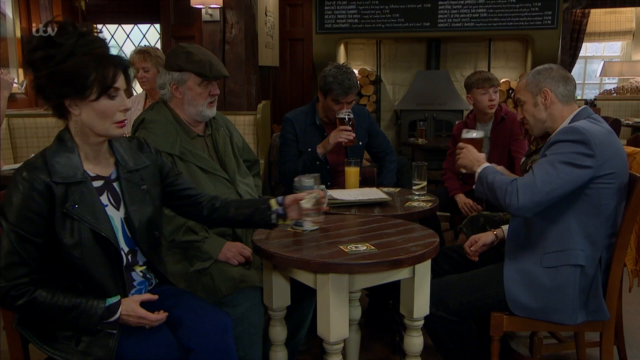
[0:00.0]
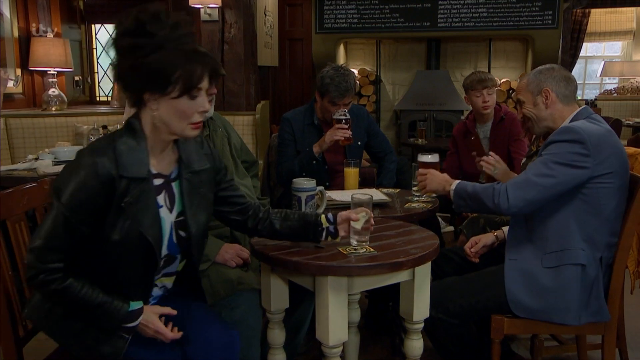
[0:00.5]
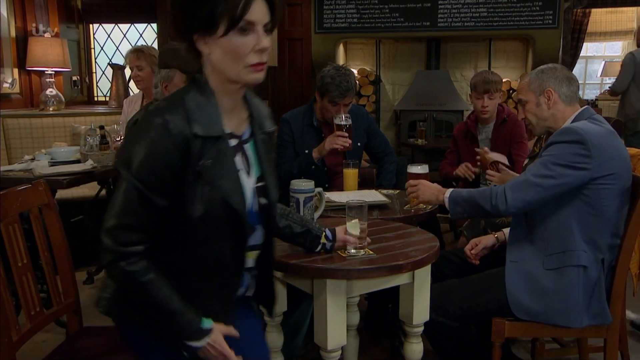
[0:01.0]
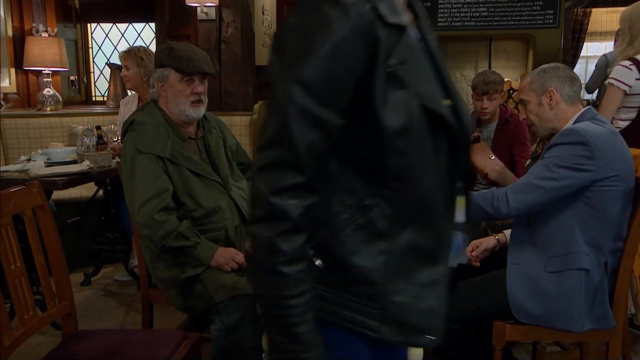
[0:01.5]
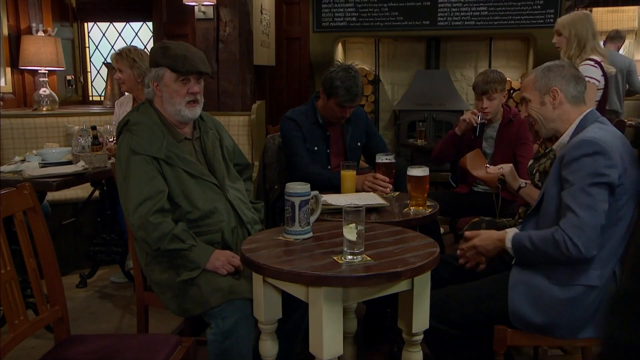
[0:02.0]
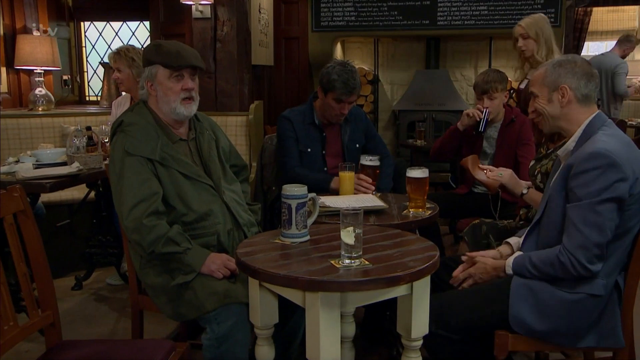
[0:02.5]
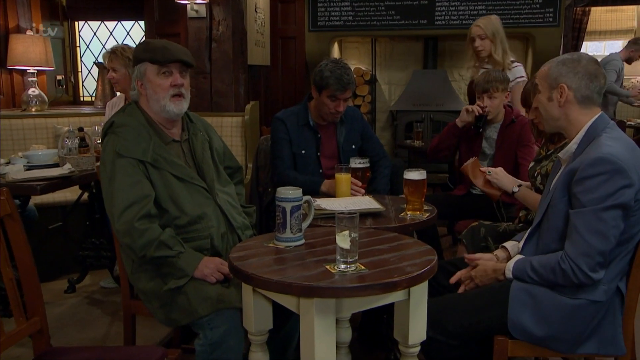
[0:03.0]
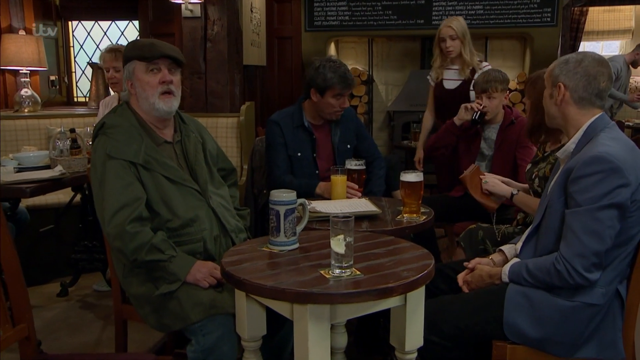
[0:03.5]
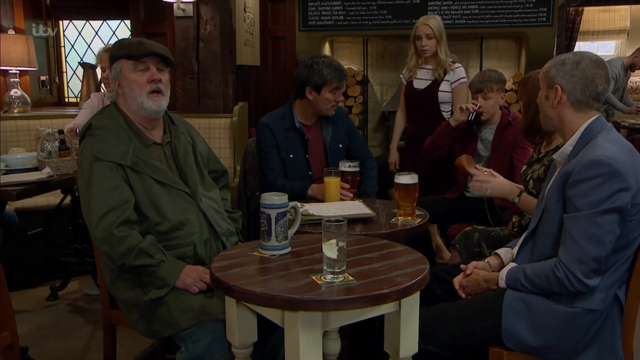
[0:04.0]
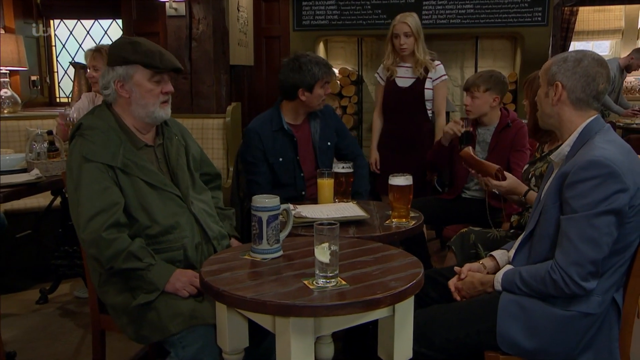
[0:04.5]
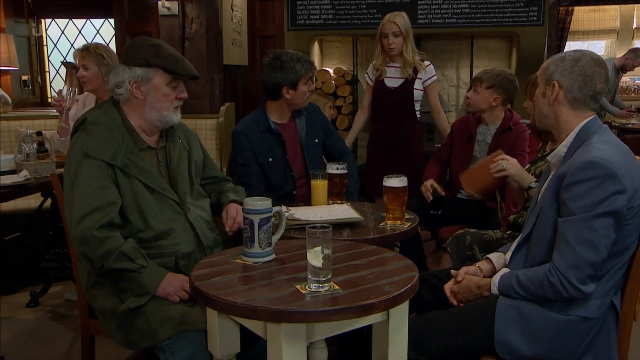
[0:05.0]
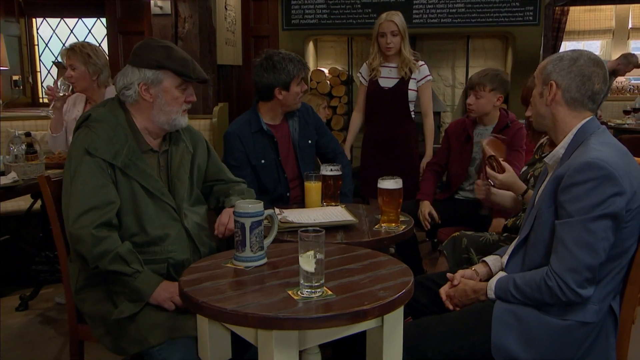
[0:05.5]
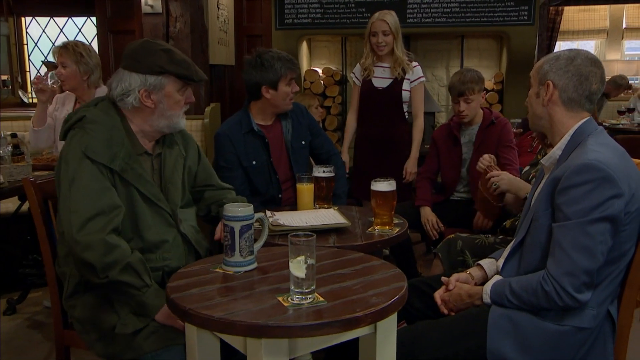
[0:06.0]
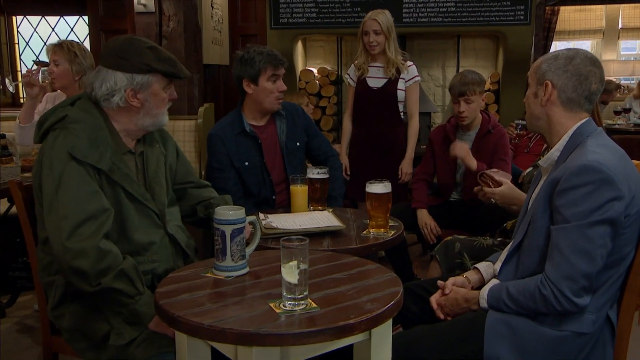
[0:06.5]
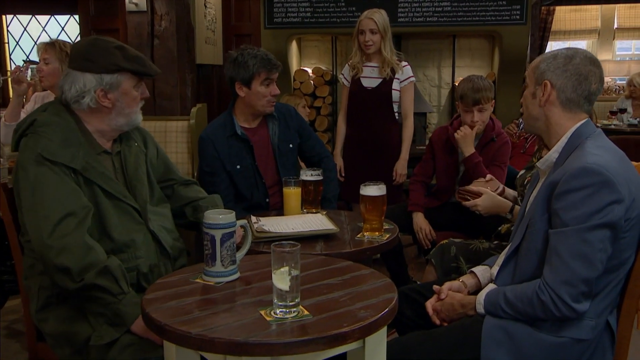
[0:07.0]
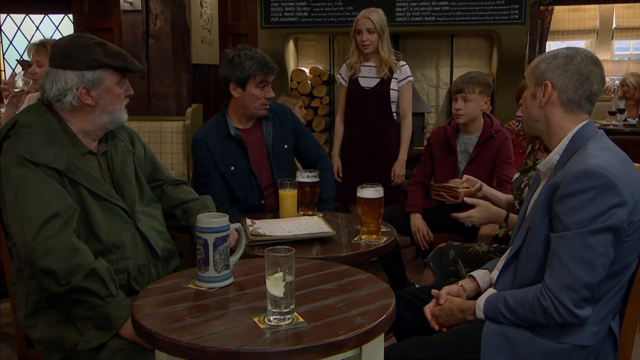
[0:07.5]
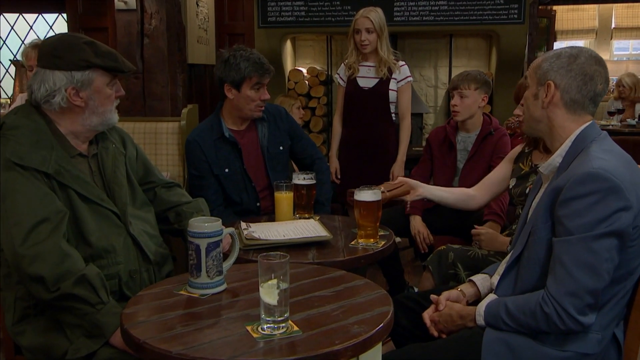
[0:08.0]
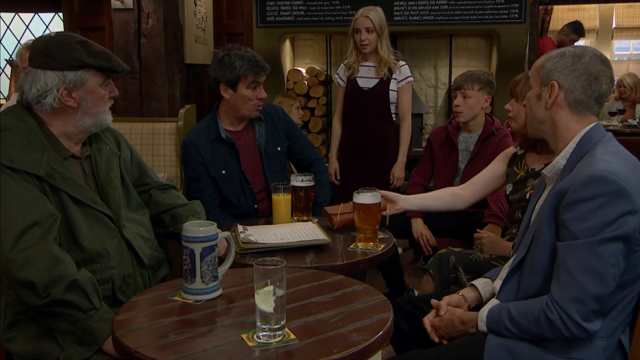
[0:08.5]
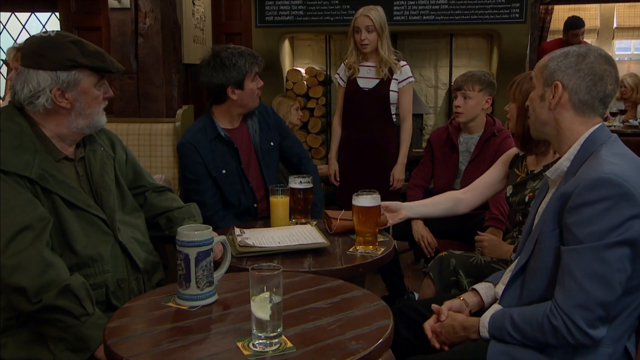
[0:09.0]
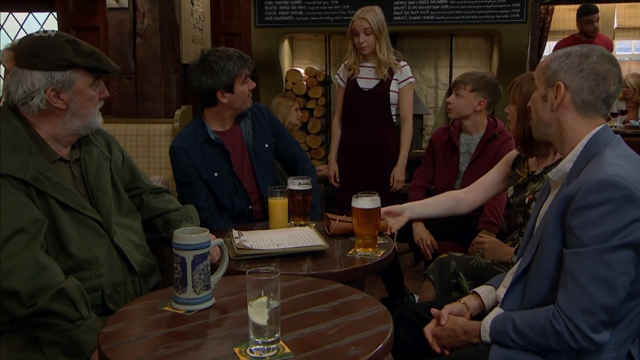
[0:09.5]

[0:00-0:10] The scene begins in a bar, where a group of five people are sitting around tables drinking beer. The woman close to the screen wears a black leather jacket, and next to her is a man in a green jacket and green hat. A man wearing a blue buttoned shirt with a red undershirt holds a glass of beer in his right hand and brings it to his mouth to take a drink. In the background, a younger man in a red hoodie has his head turned toward the right side of the screen, and a man in a light blue sports jacket holds a beer just above the table in his left hand. The woman in the leather jacket places her empty cup down on the table, stands up and walks away off camera to the right side of the scene. A waitress in a black apron walks up to the group at the tables and begins to ask some questions, her hands down by her sides. The man in the dark blue buttoned shirt and red shirt responds, turning his head toward his left shoulder. A woman in a green dress with a floral print places her purse down on the table with her right hand.